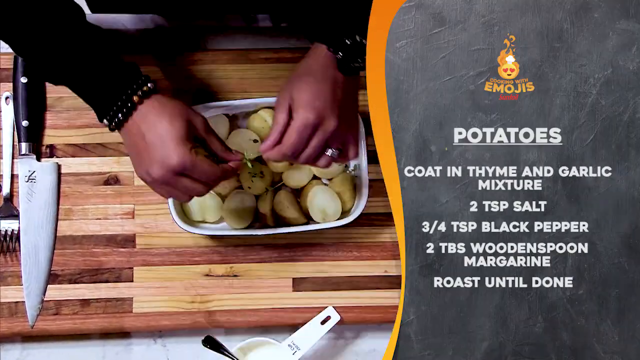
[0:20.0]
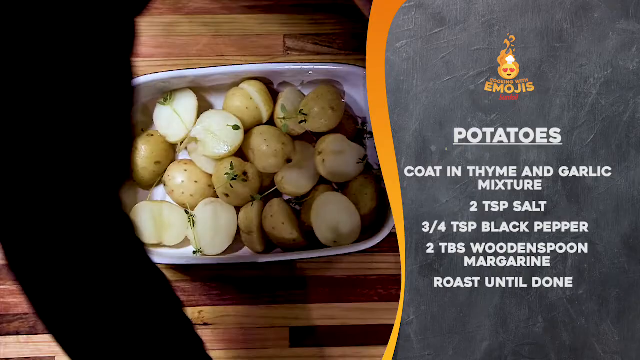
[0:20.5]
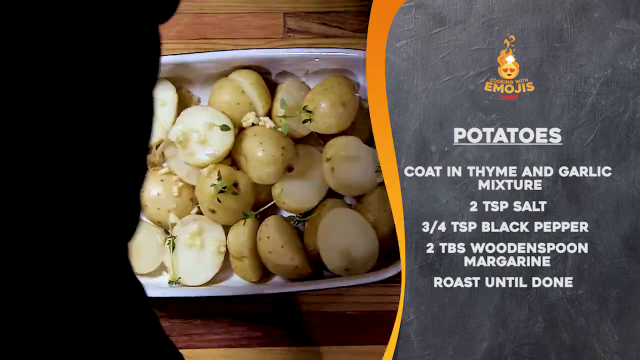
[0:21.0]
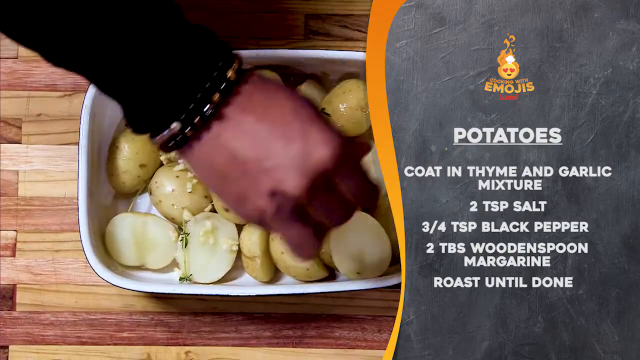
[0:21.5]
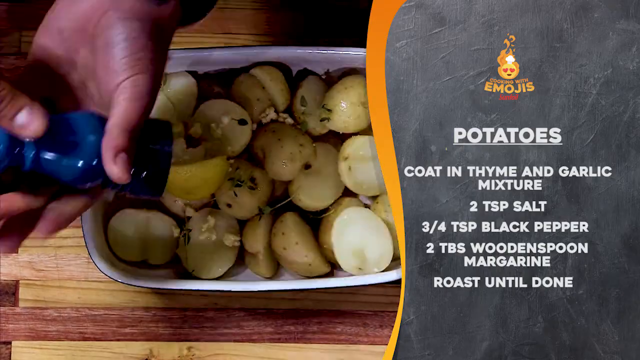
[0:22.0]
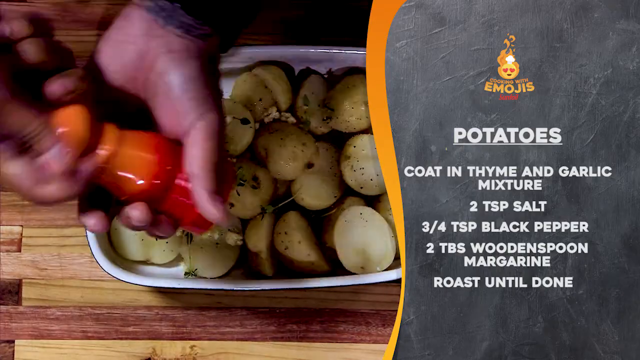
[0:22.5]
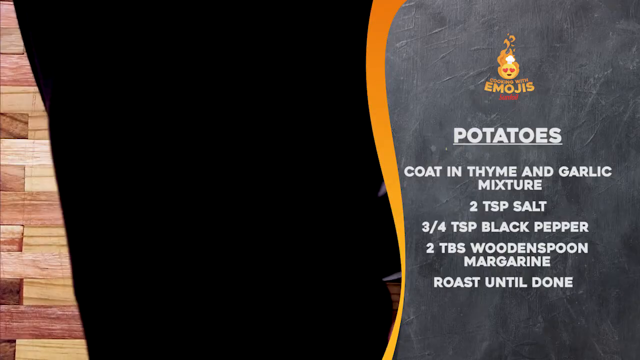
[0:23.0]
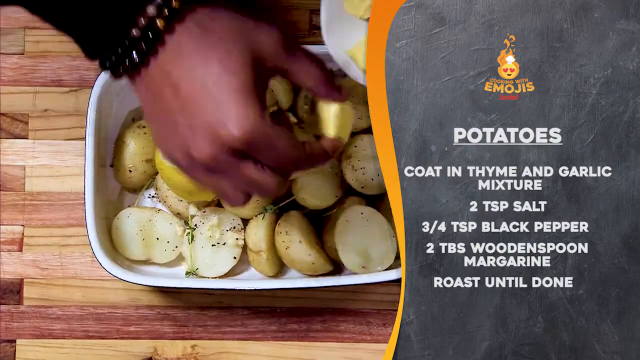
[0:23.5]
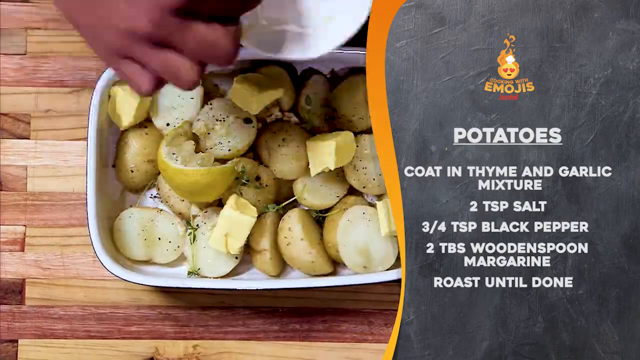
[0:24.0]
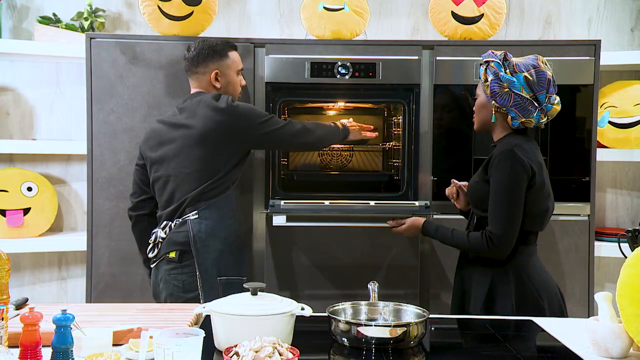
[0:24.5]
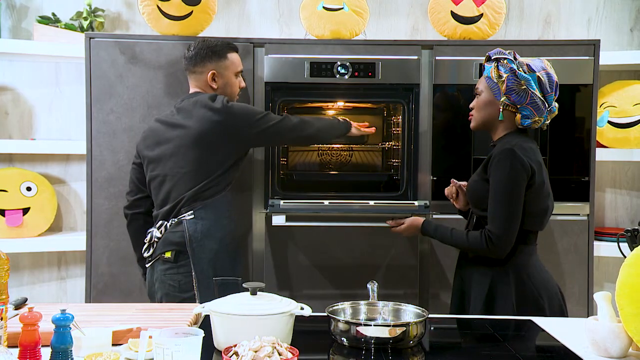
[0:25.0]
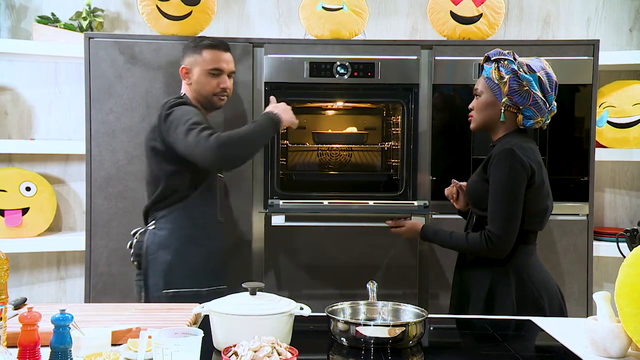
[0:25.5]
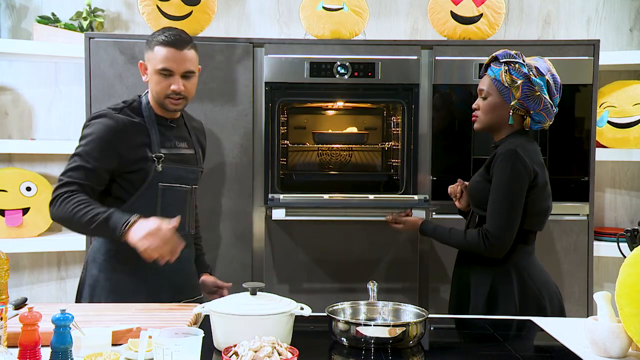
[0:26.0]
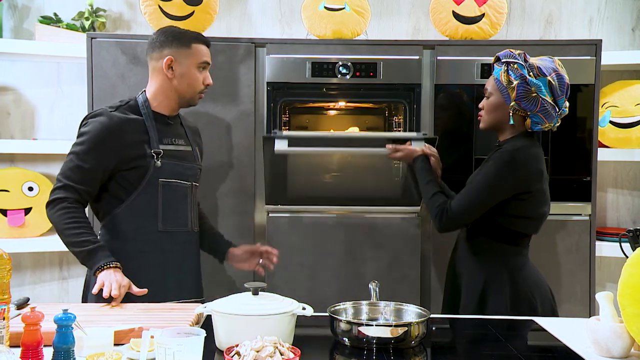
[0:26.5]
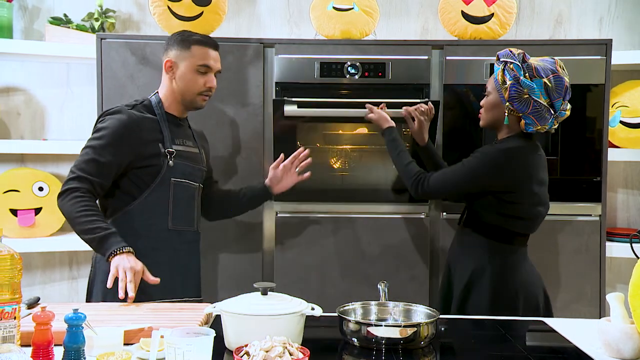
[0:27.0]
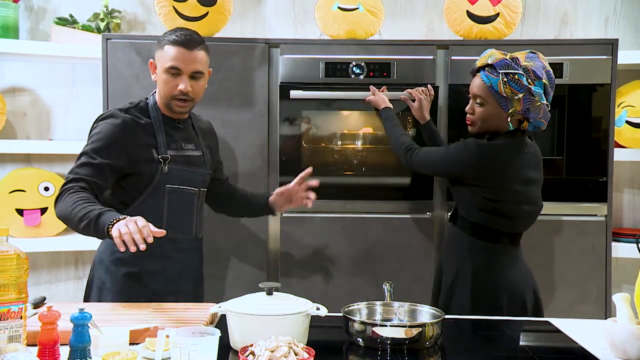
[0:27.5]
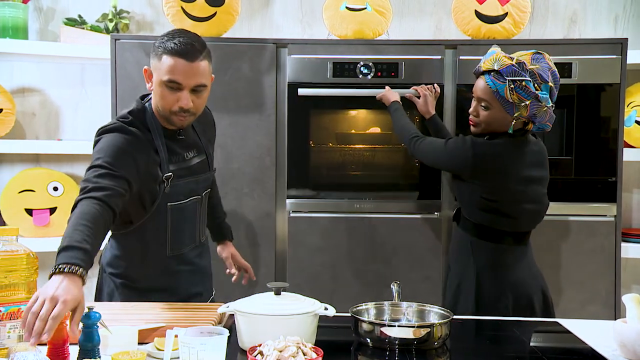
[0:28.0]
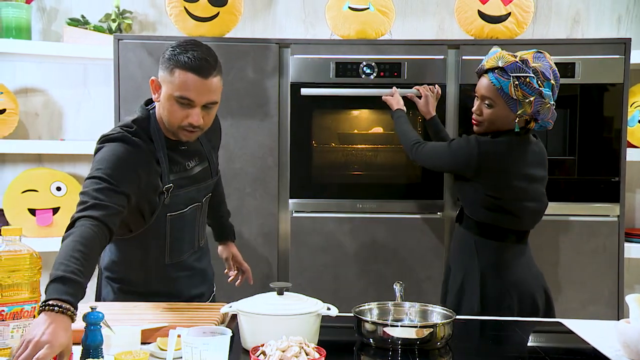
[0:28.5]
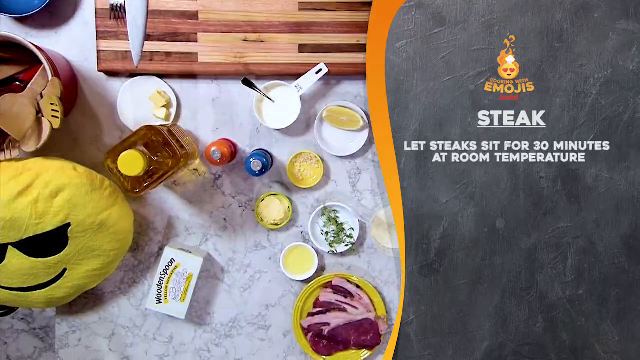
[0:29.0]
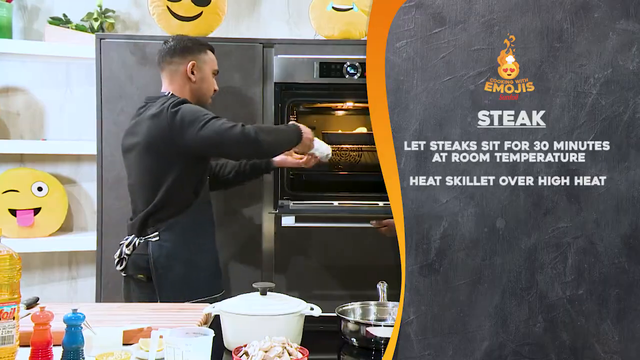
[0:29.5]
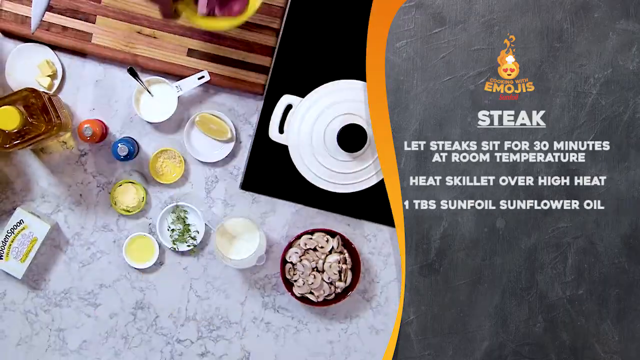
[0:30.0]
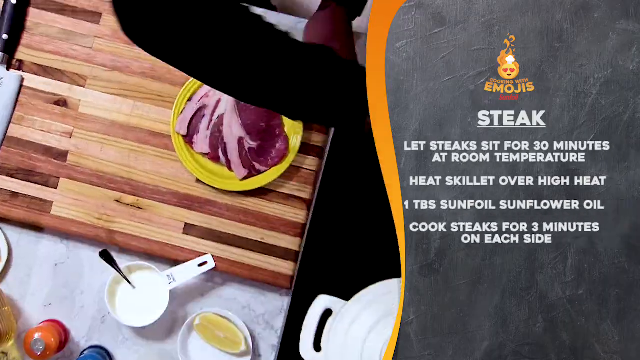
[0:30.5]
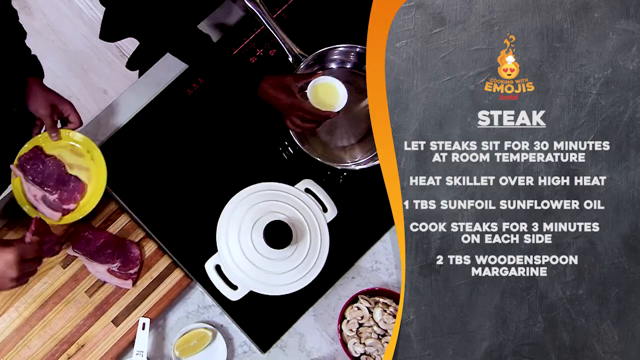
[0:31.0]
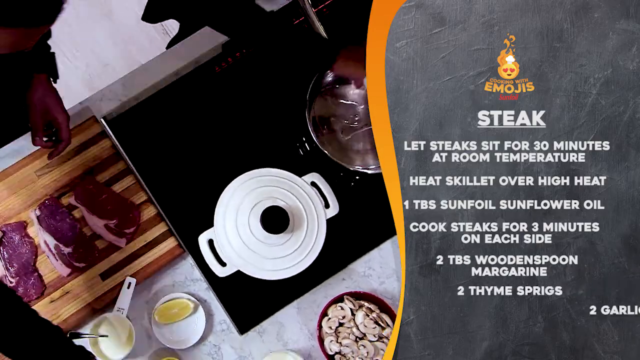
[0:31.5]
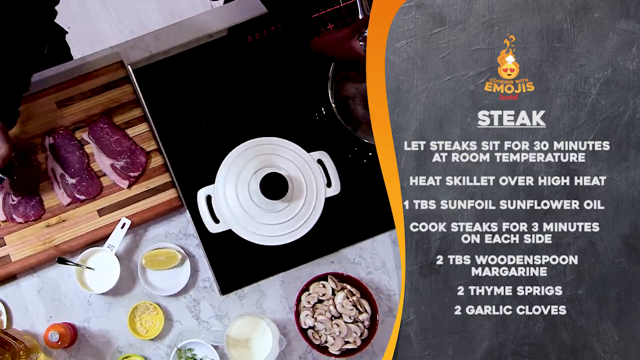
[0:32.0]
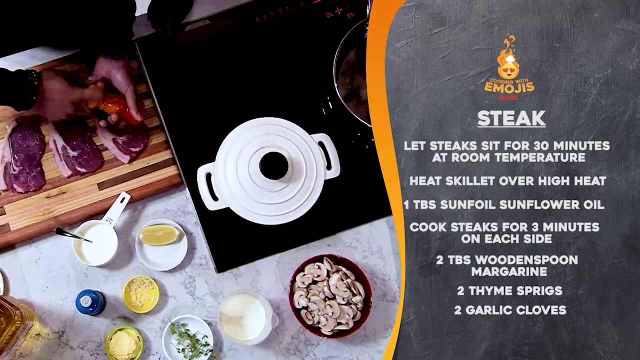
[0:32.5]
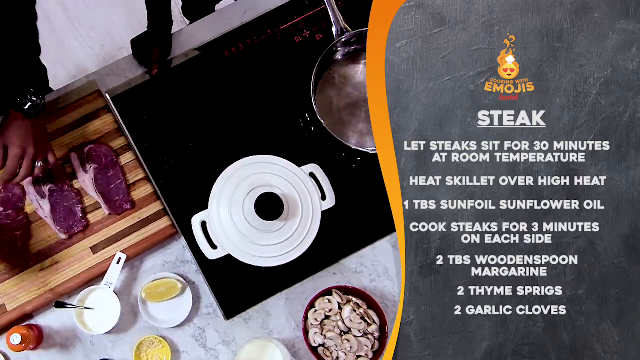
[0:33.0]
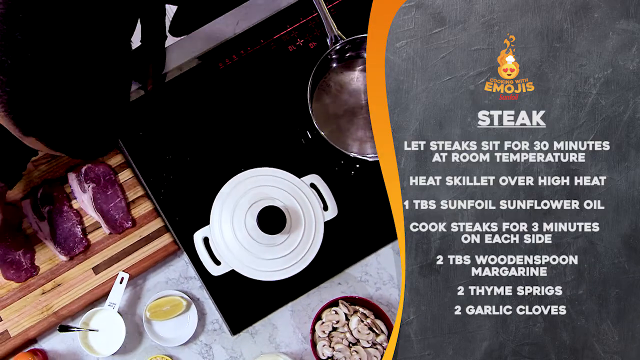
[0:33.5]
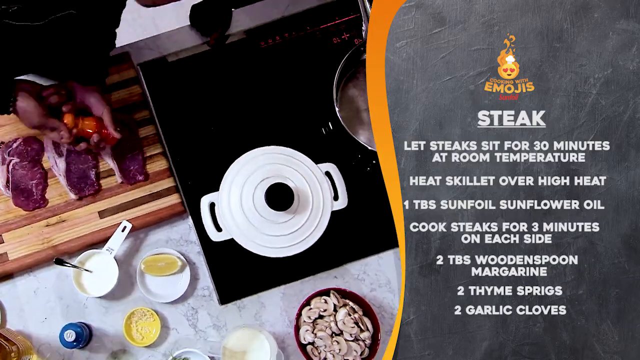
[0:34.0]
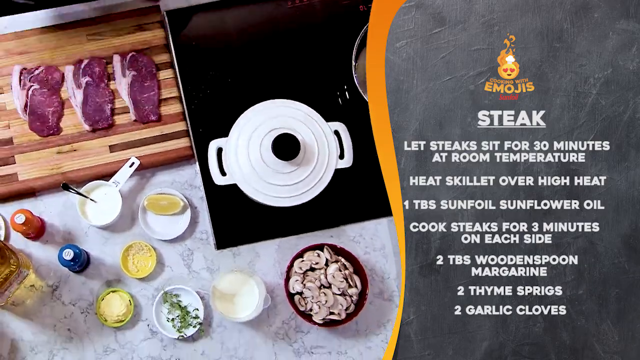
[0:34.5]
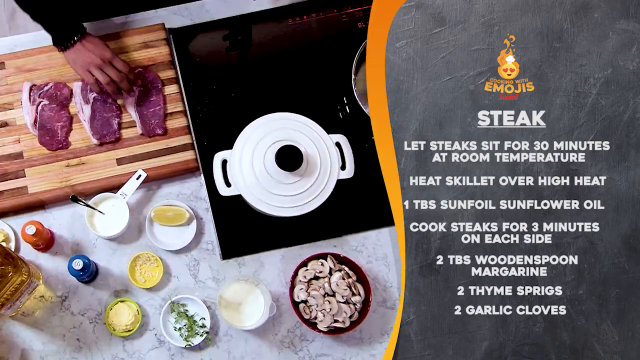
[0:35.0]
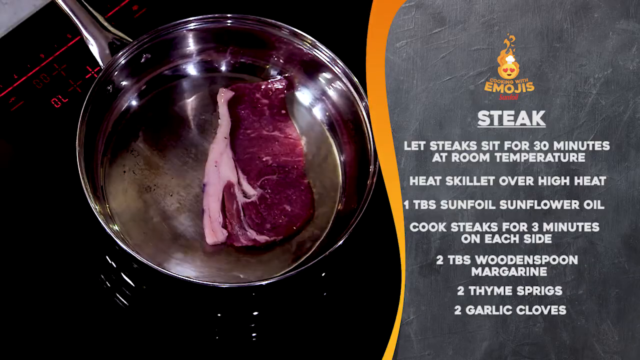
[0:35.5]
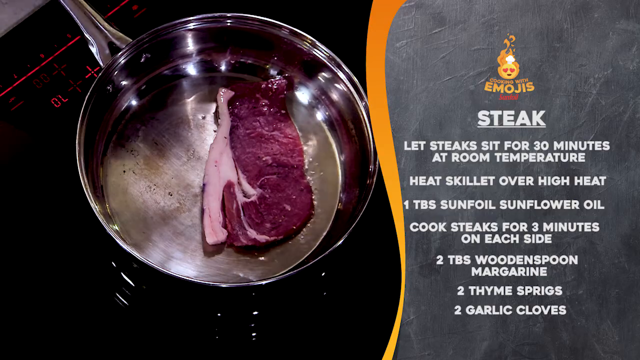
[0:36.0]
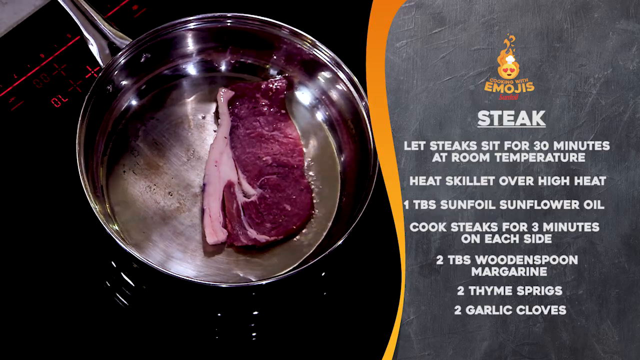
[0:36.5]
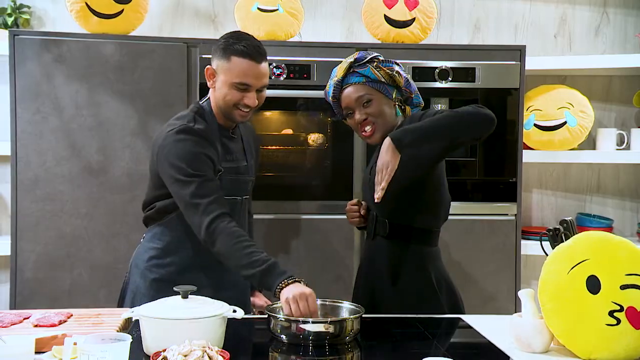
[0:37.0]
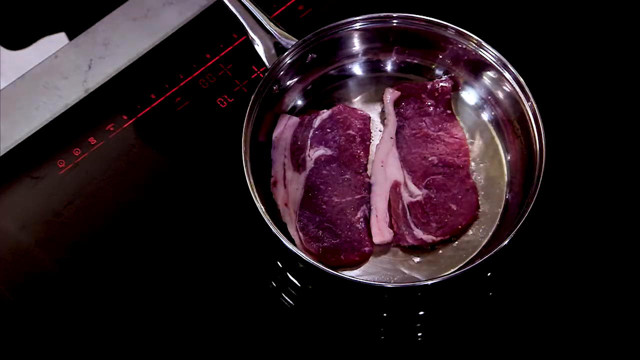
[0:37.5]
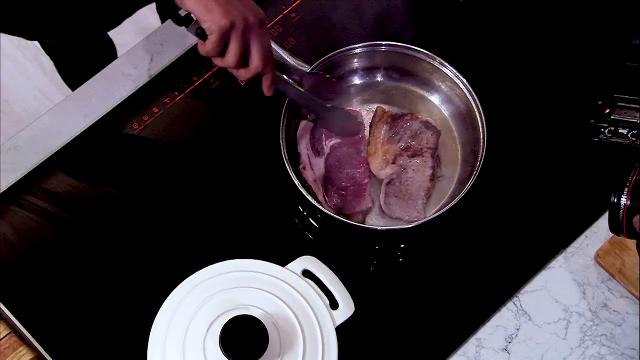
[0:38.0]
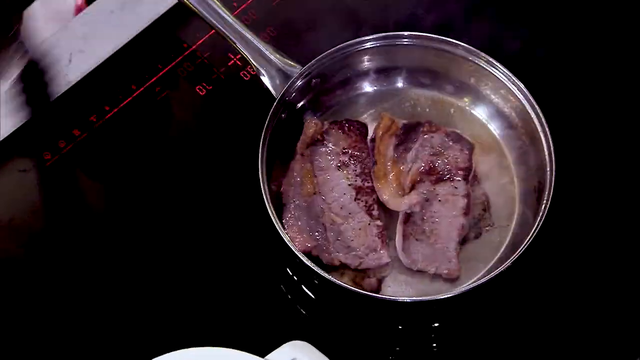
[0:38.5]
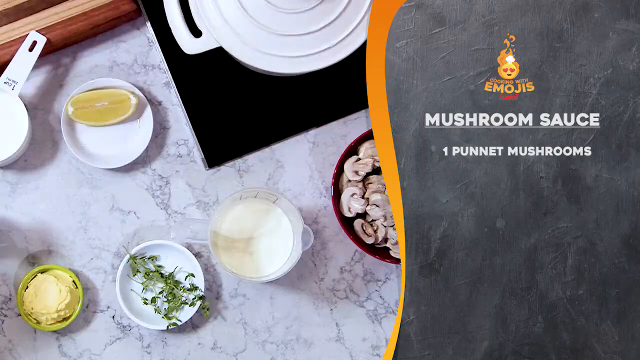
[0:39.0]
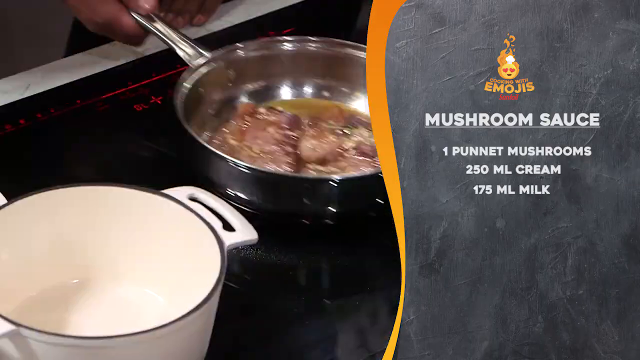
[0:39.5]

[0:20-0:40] Shown in fast motion, the man puts the lime over the potatoes along with the butter and the rest of the ingredients. He puts the food in the oven with his right hand while the woman closes the oven for him with both of her hands. He then starts seasoning the steaks while she gets a stainless steel pan ready on the electric stove. The steaks grill on the stove and are flipped over with tongs. The woman uses her left hand to shake the pan while the man uses both hands to put all the seasoning on.